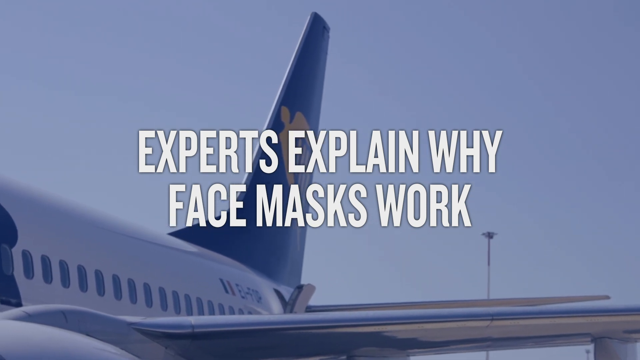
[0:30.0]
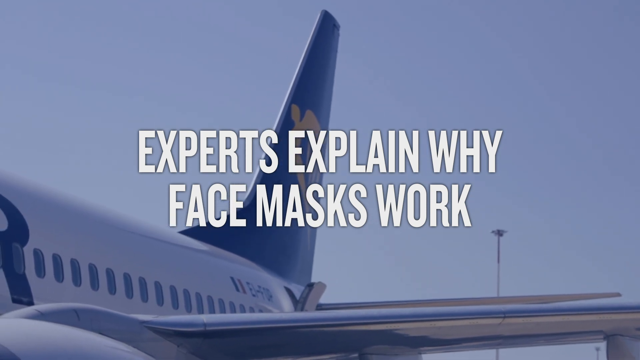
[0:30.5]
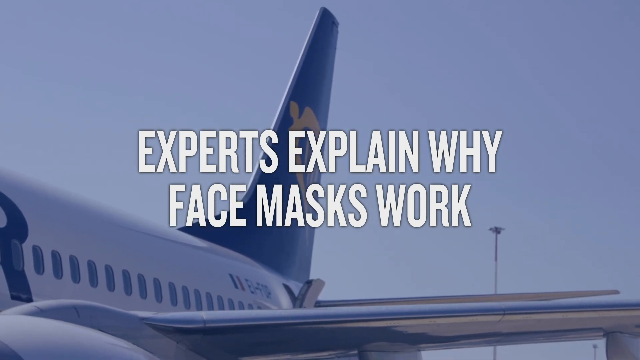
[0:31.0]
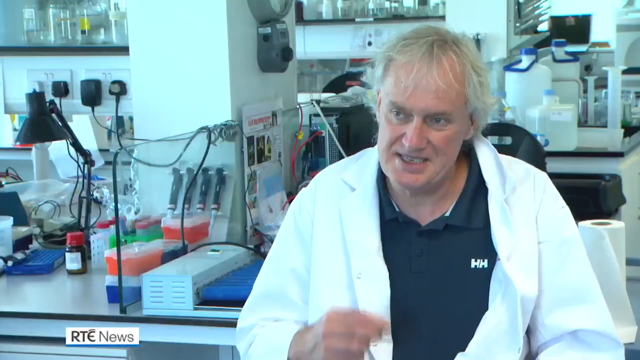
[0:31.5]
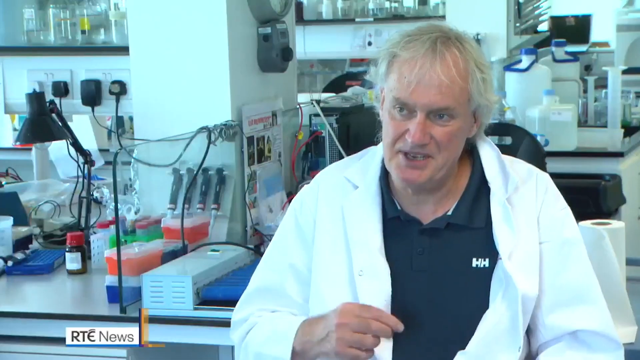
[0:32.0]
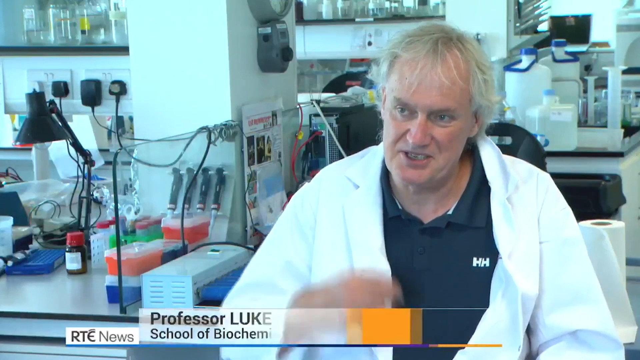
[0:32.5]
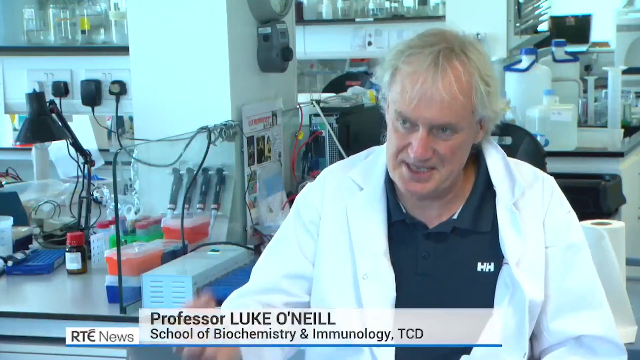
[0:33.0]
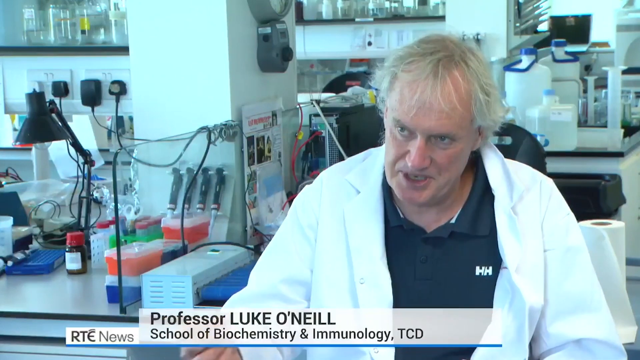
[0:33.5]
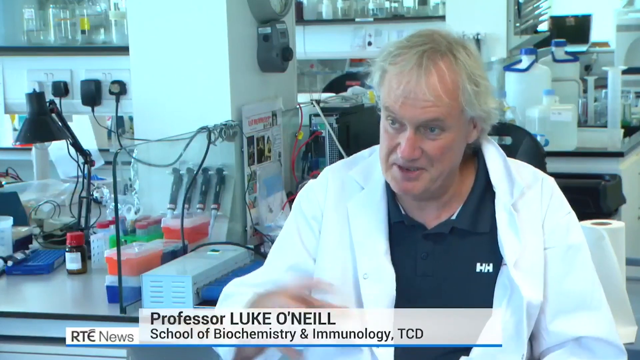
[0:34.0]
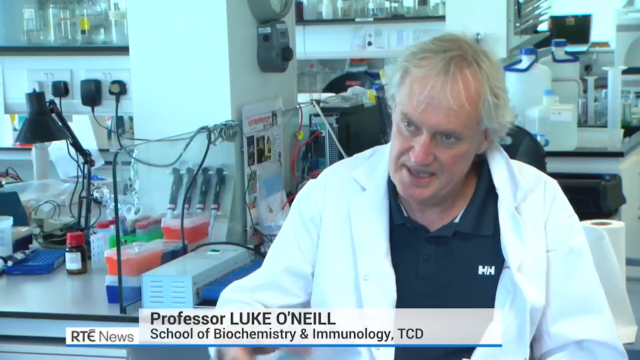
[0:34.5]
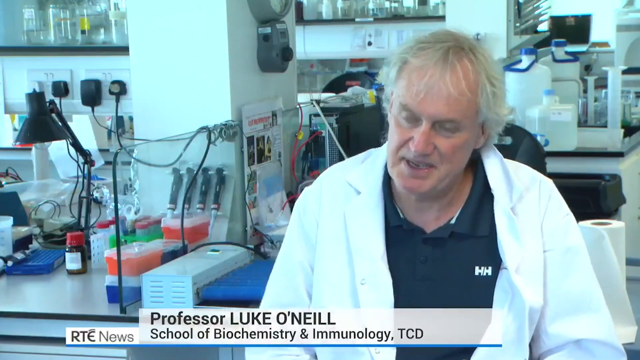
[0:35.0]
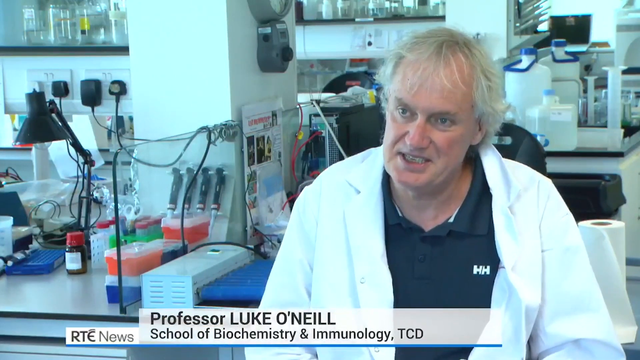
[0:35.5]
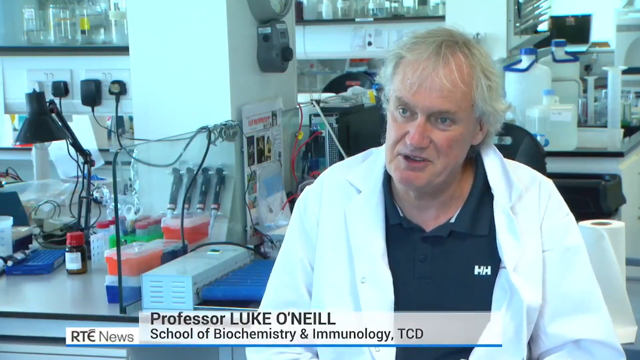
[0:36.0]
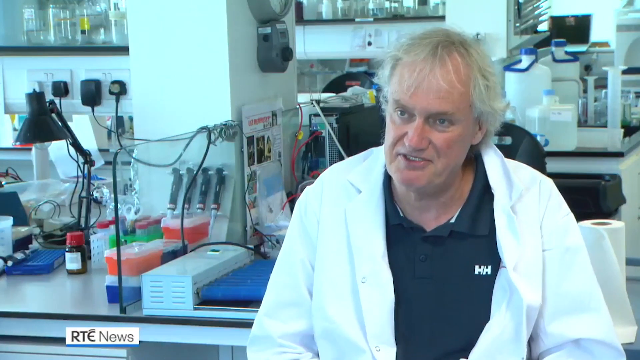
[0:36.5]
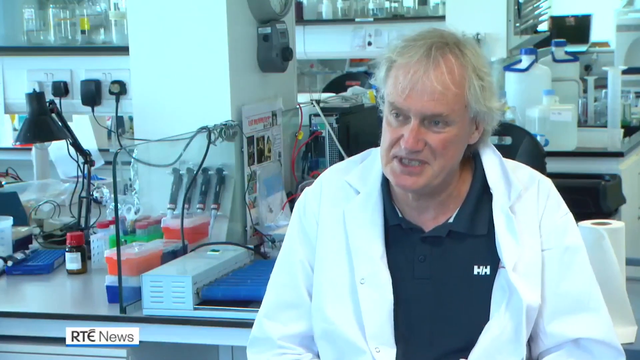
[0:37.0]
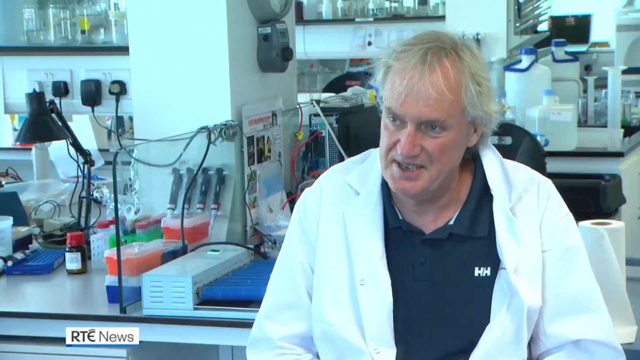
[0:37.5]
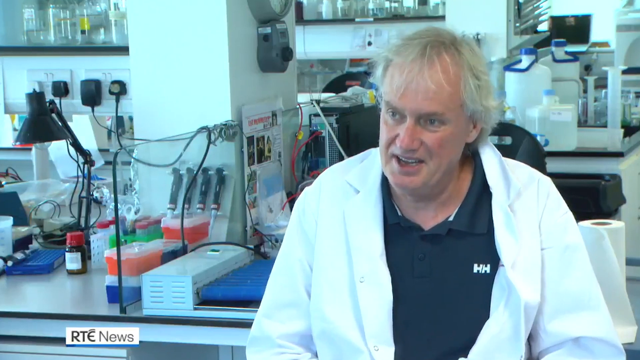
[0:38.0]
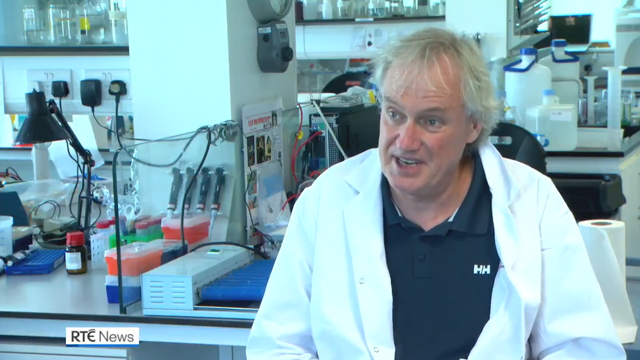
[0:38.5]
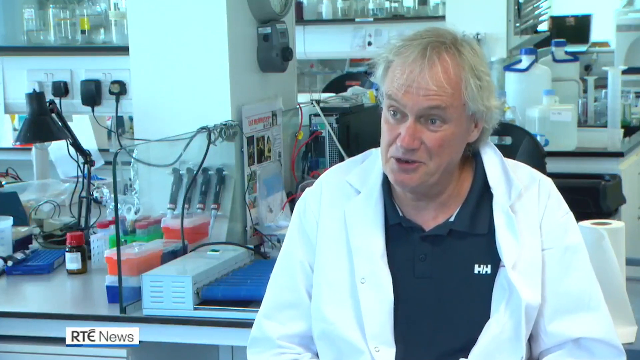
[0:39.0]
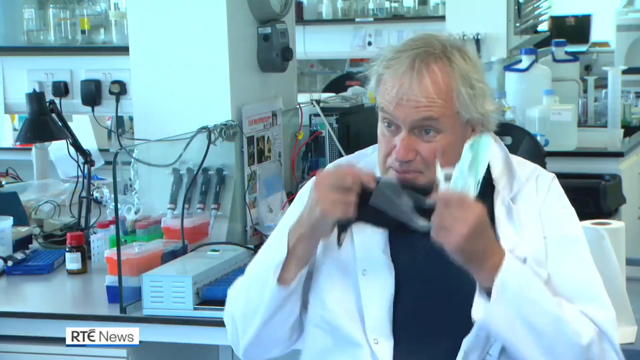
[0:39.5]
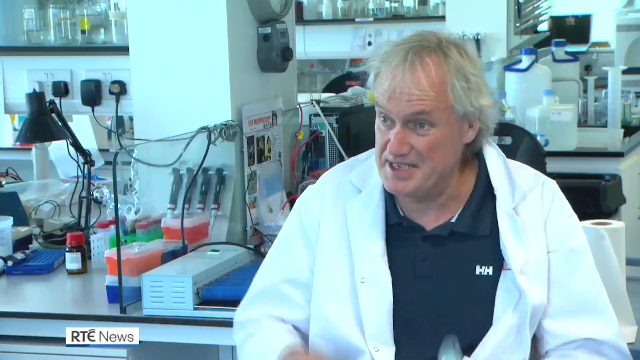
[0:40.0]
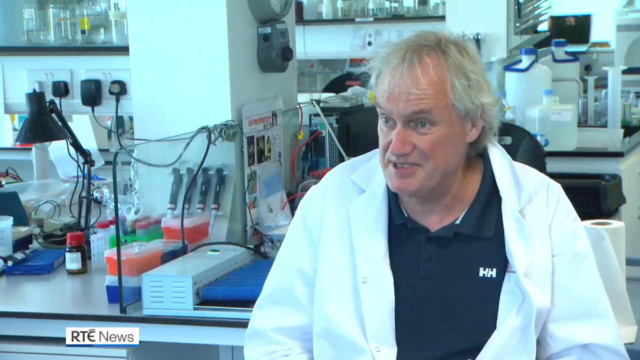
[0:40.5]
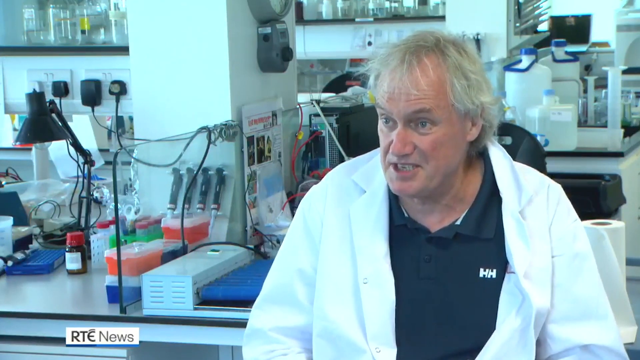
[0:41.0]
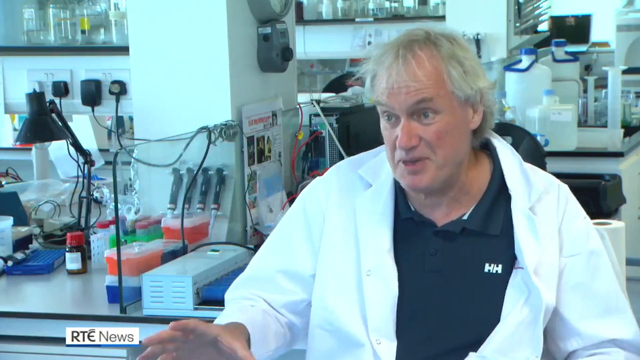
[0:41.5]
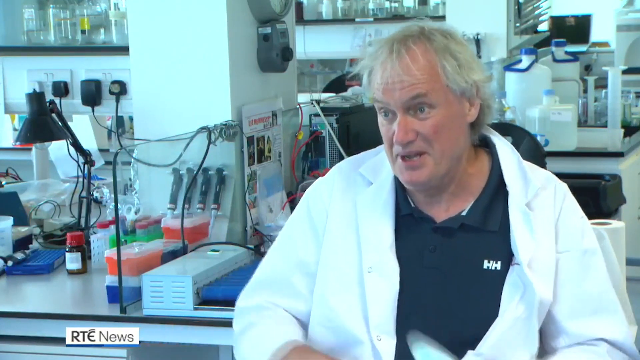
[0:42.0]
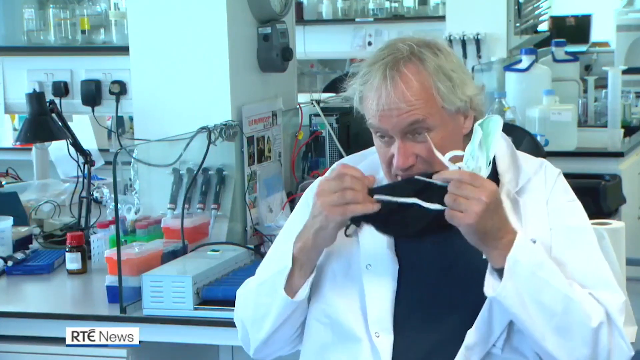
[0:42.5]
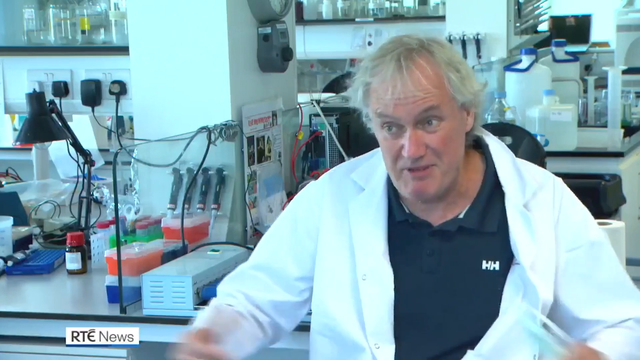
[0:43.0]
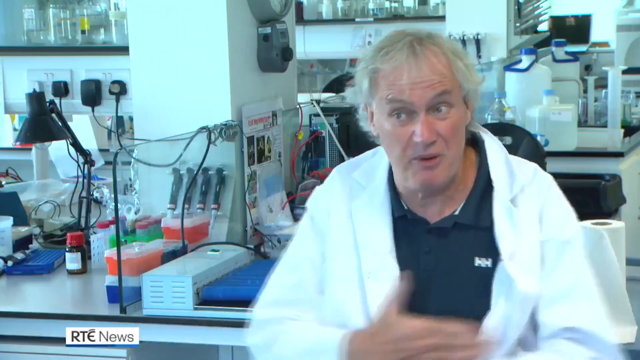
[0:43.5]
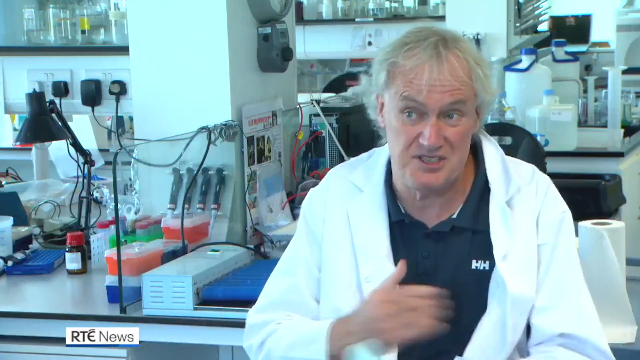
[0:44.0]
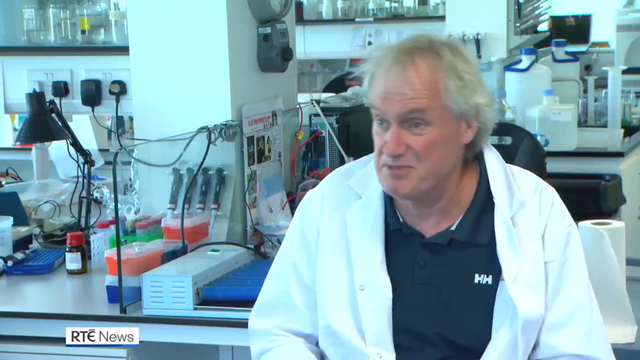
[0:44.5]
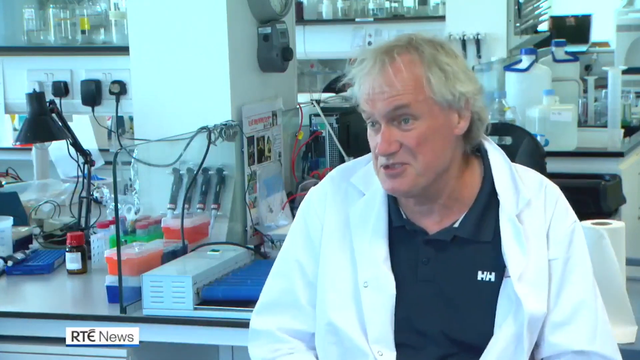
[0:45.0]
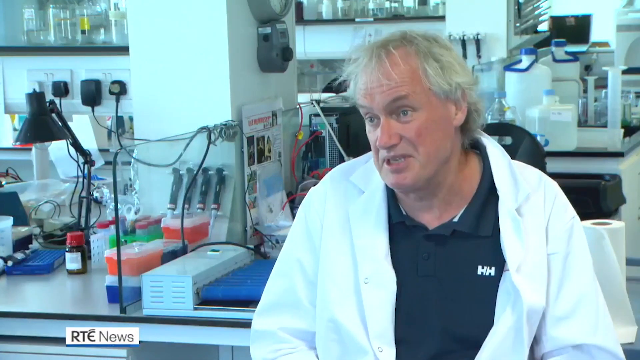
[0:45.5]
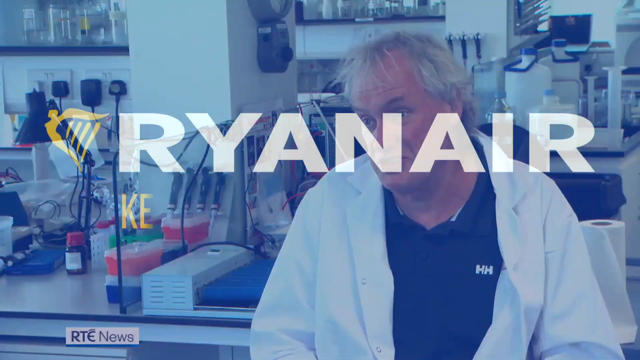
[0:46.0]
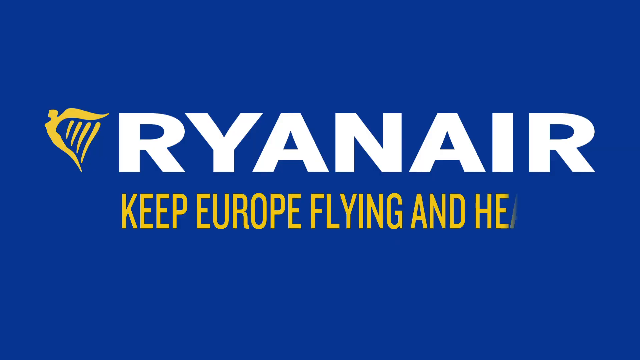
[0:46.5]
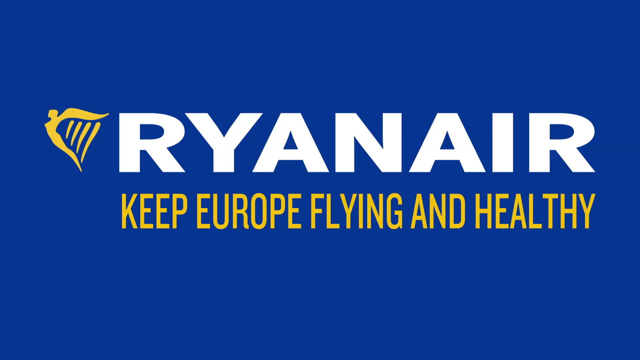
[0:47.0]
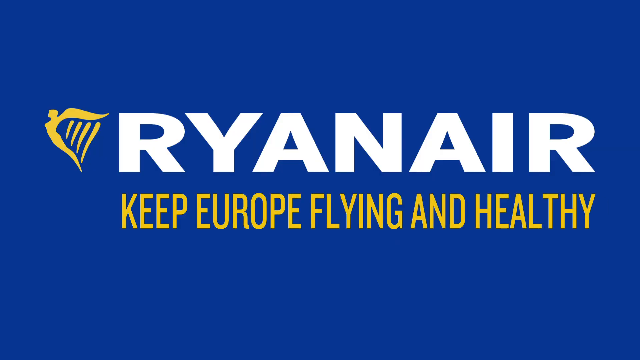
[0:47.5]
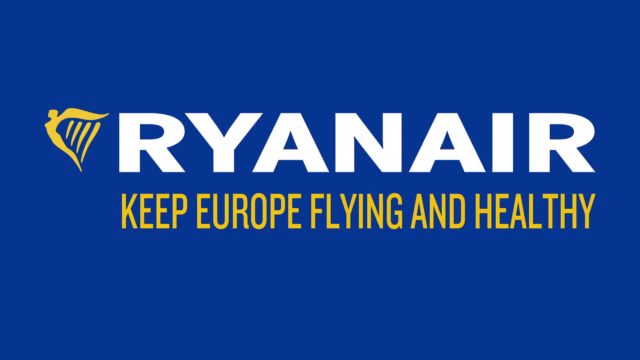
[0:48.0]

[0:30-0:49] Text begins "experts explain why." A plane is at the bottom left, and on the right is blue sky with a tall object that has a small circle on it. The camera pans along the plane. The scene then shows a man on the right side of the screen with white hair, wearing a white jacket over a blue shirt. He looks toward the left of the screen and motions with his right hand; he holds a blue mask in his left hand and a dark mask in his right hand. White lettering appears on a black backdrop. Around the man are multiple red and orange objects with clear tops. White jugs with blue handles are at his back, and on his left are multiple containers and multiple cords. A bright area to his left, on the right of the screen, looks like a lab. There is a white cylinder with a brown circle in the middle. The man is Professor Luke O'Neill.